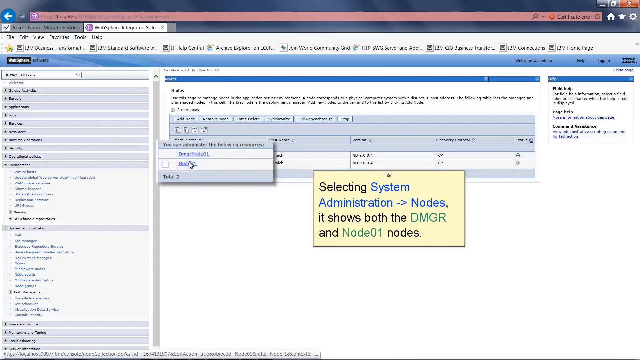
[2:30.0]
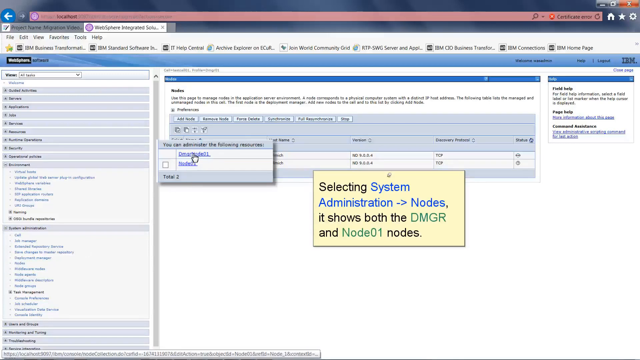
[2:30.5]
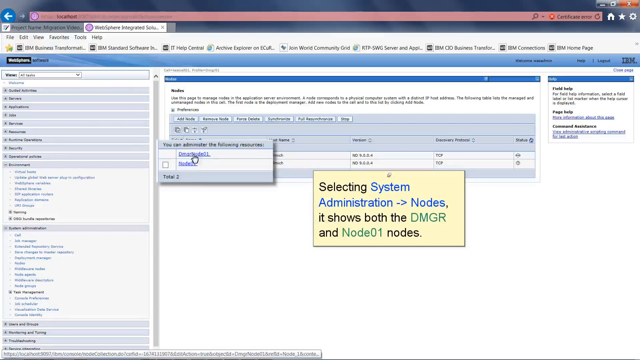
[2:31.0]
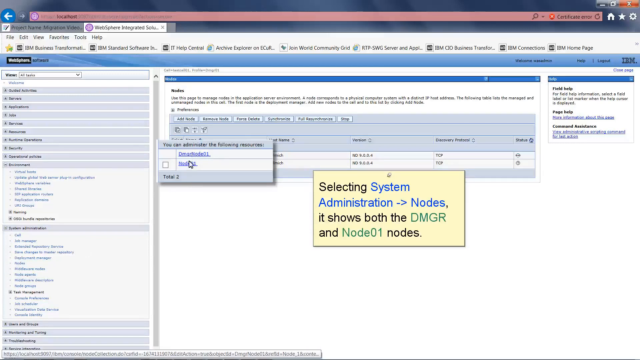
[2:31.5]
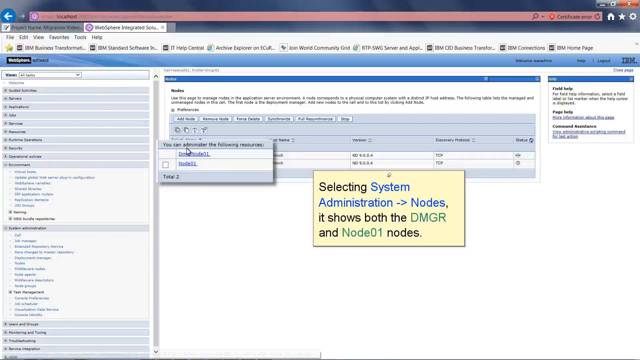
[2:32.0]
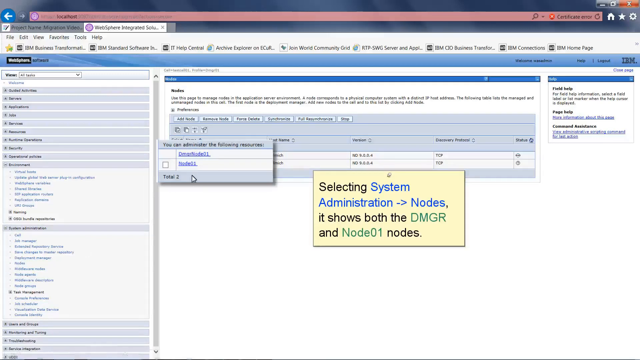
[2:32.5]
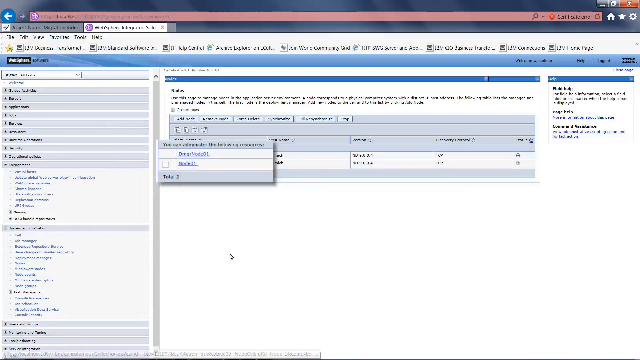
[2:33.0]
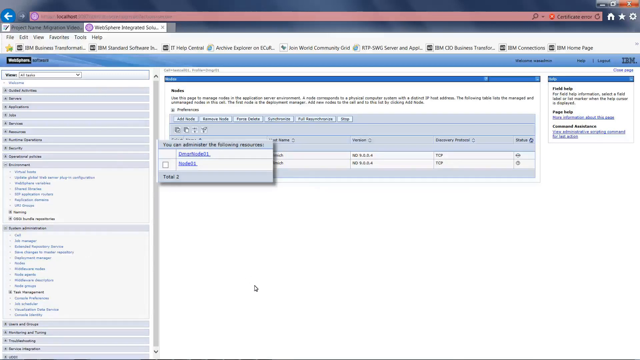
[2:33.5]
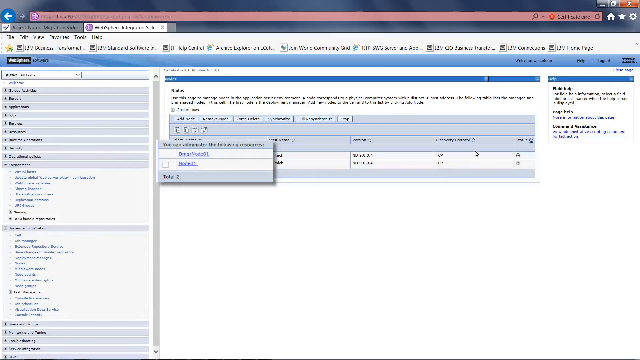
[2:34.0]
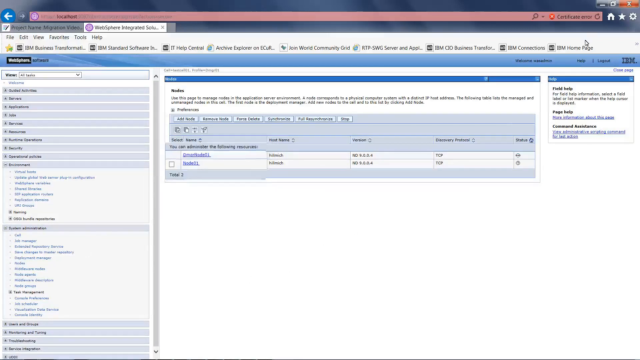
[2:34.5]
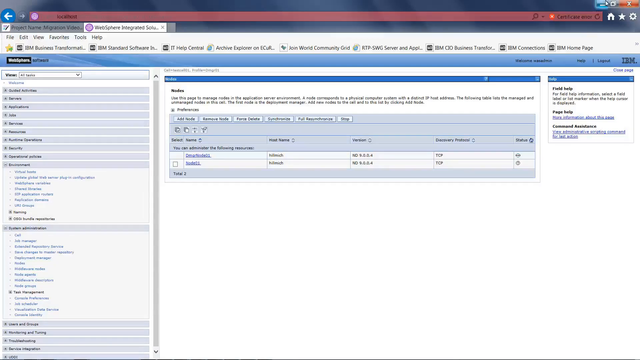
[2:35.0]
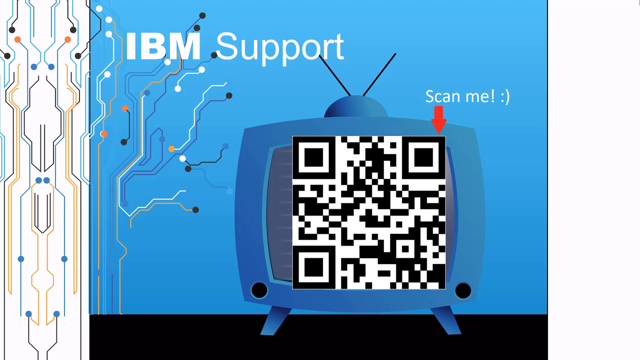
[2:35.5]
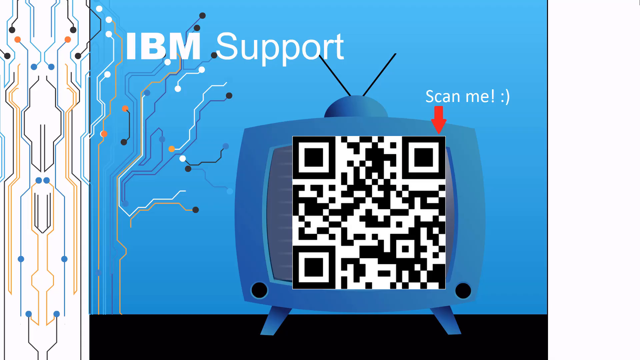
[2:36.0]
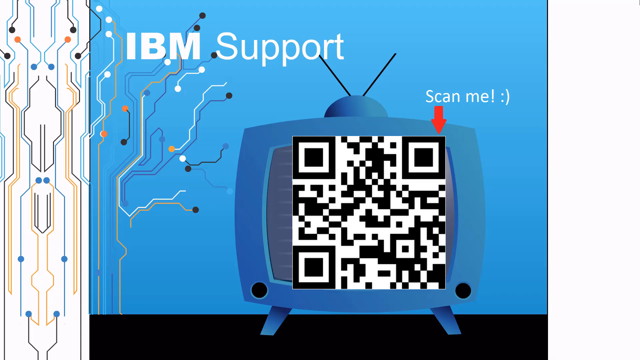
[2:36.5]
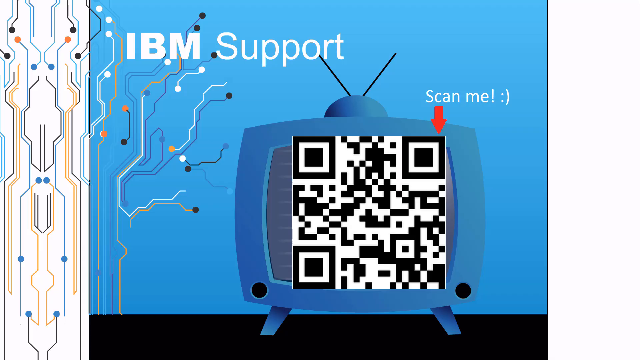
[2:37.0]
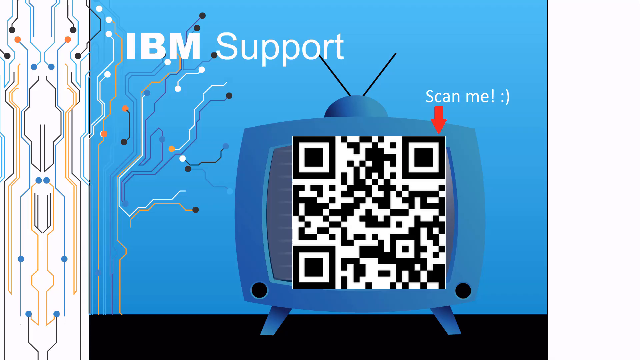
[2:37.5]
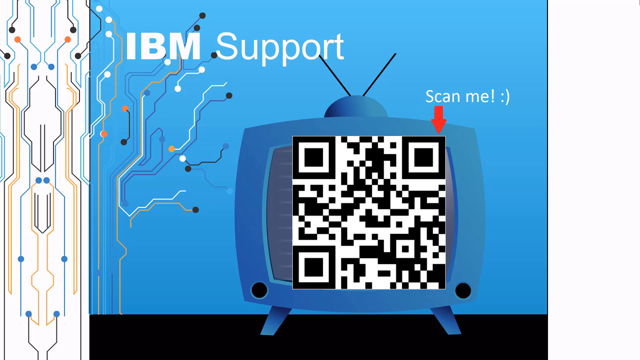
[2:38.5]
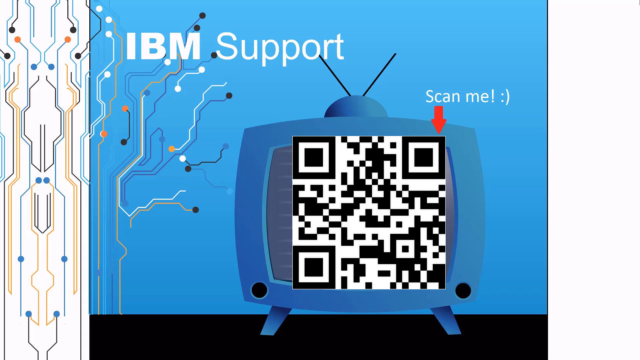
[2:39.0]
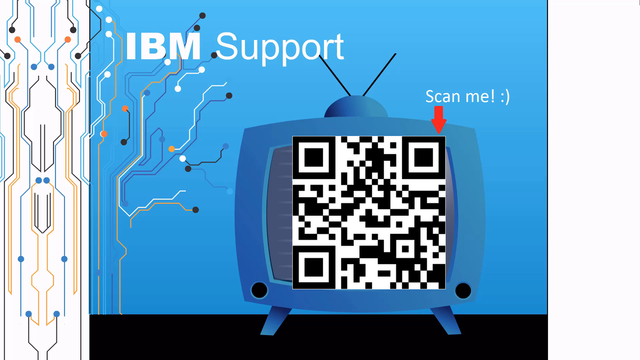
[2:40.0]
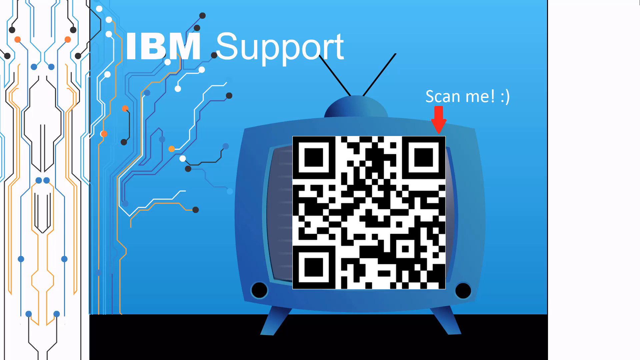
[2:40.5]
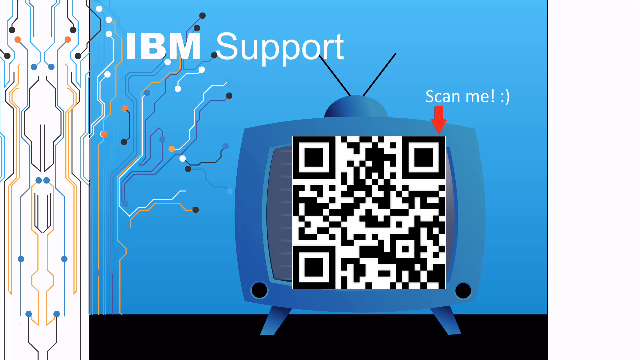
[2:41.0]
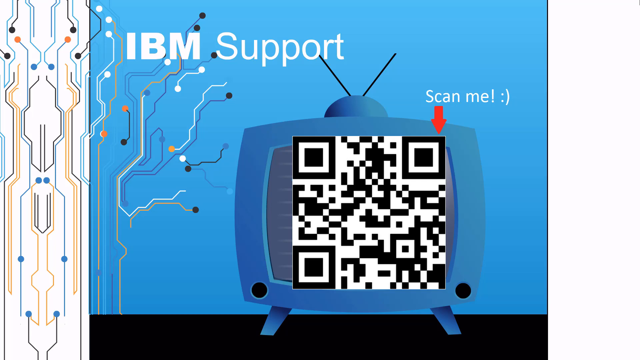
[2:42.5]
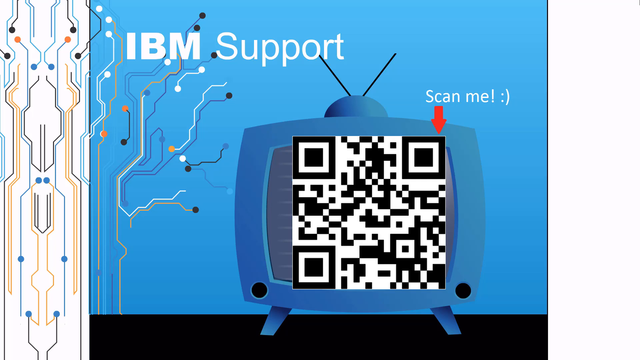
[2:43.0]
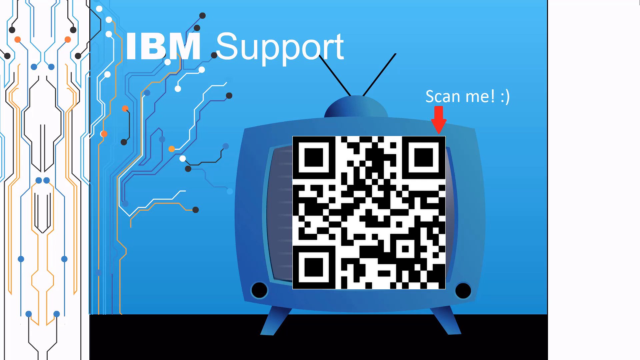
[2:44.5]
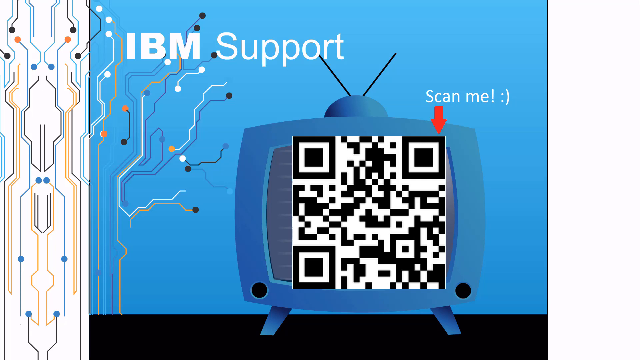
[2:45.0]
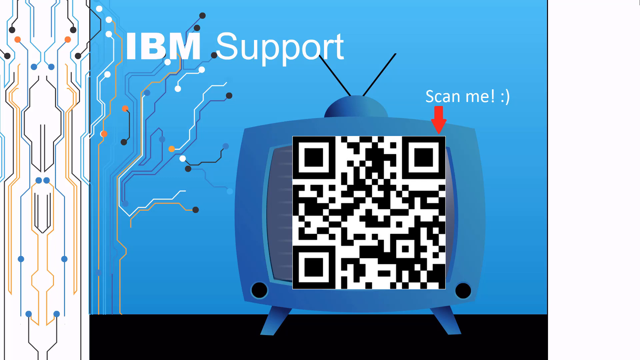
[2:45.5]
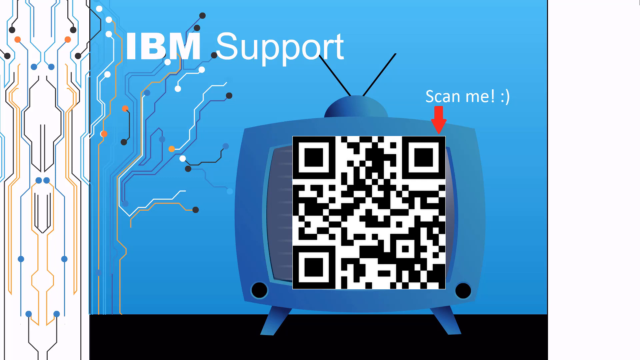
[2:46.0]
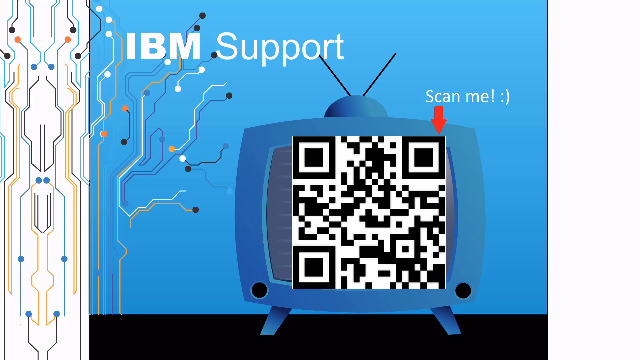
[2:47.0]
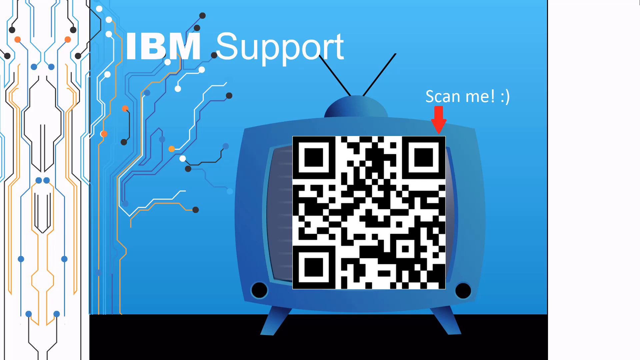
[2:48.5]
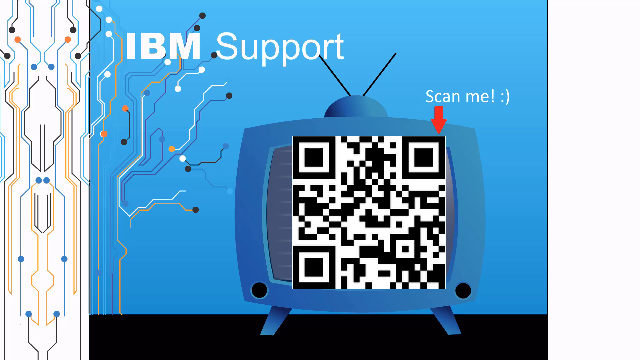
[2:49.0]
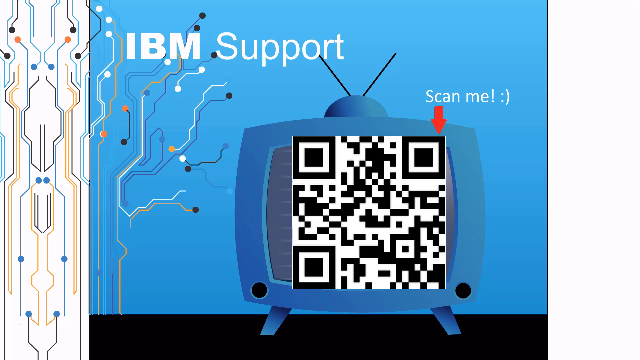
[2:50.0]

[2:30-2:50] The WebSphere Integrated Solutions Console dashboard shows the Nodes page with a chart listing two options. In the first column, labeled "you can administer the following resources," the options are magnified and popped out while the user hovers over them. A light yellow rectangular box overlaying the screen reads "selecting system administration" followed by a right arrow and "node, it shows both the DMGR and Node01 nodes." After a few seconds the yellow box disappears, and the user hits the minimize button in the top right-hand corner of the browser, which closes the browser. A screen then appears with a blue background and white color blocks on the left and right sides, showing a cartoon clip art image of a large TV with a large QR code on its screen. Above, to the right, a red arrow points down to the QR code, and above it in white font it says "scan me" followed by a smiley face.